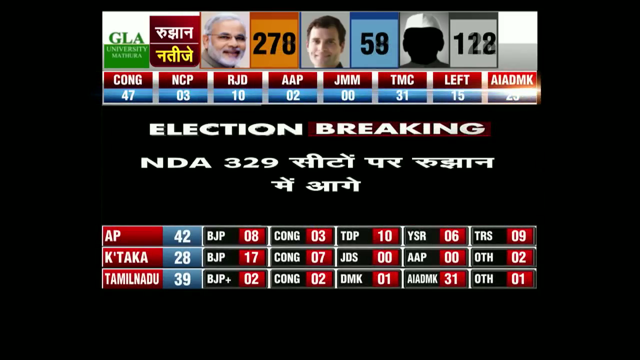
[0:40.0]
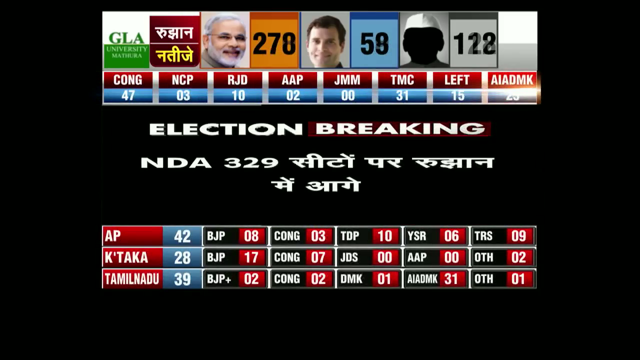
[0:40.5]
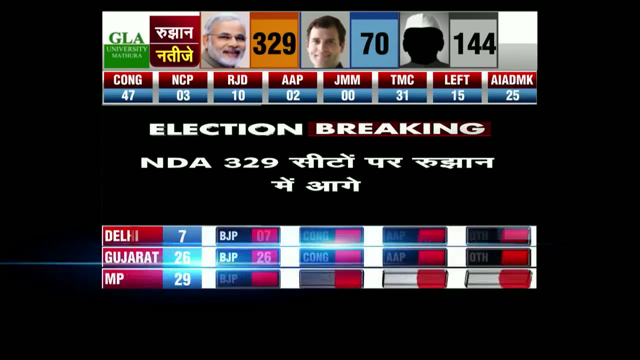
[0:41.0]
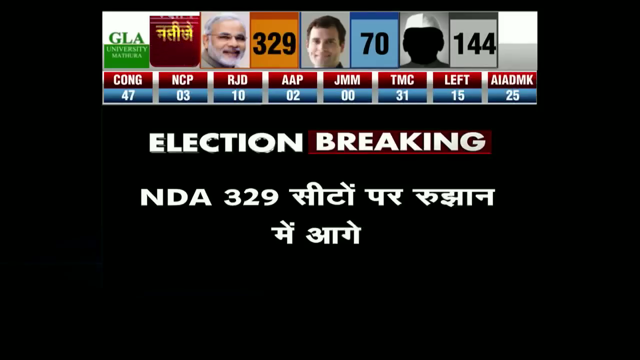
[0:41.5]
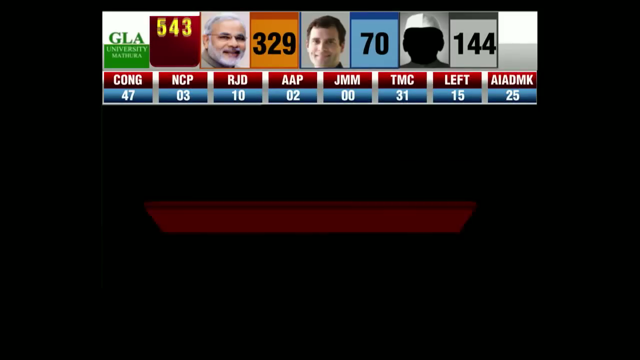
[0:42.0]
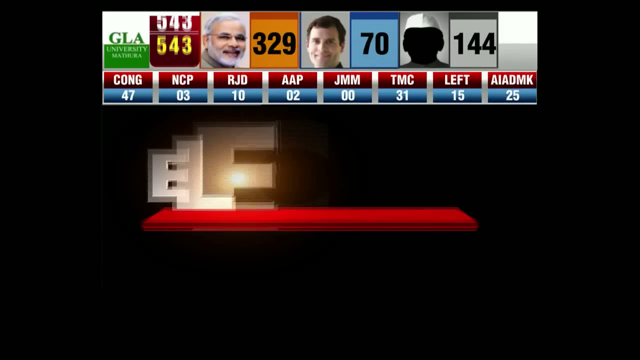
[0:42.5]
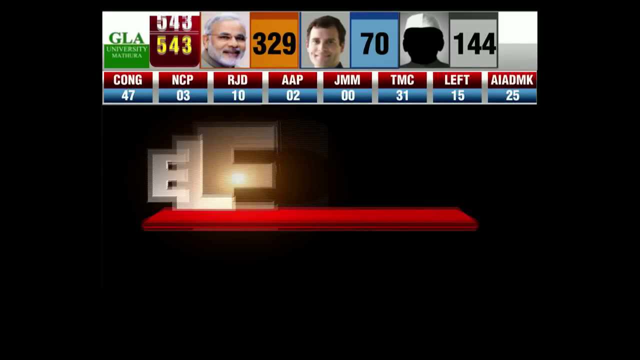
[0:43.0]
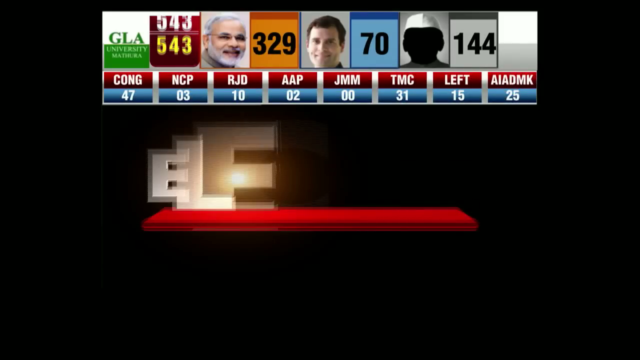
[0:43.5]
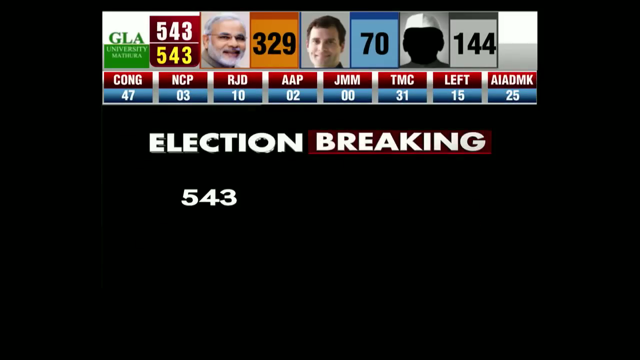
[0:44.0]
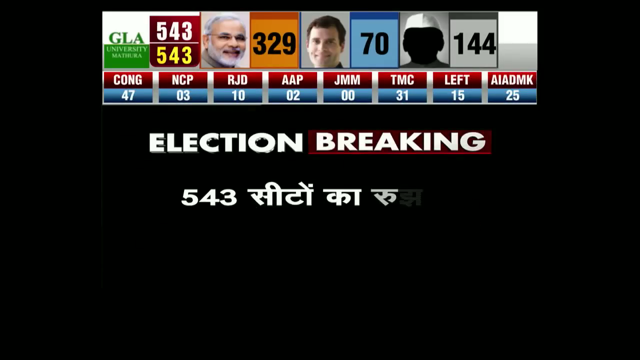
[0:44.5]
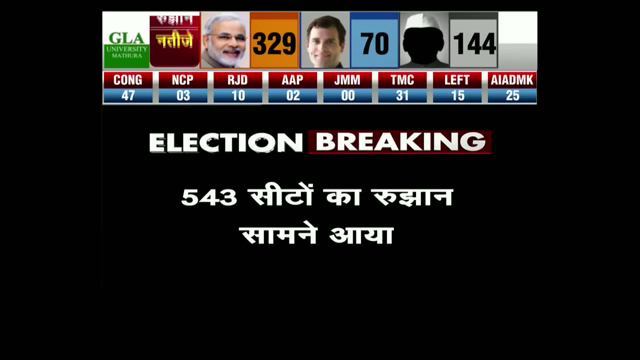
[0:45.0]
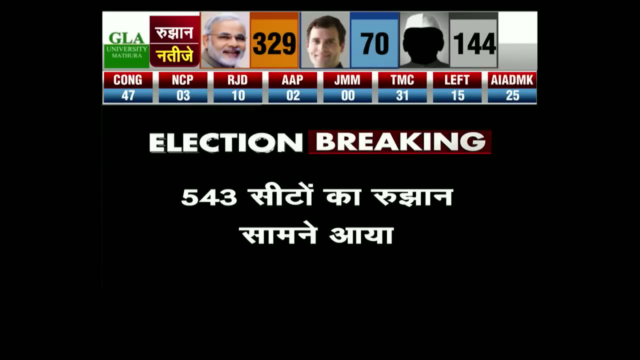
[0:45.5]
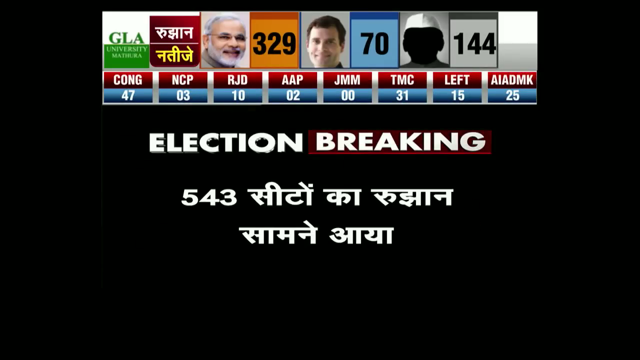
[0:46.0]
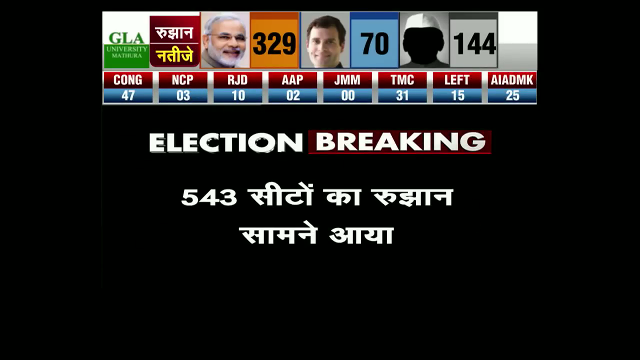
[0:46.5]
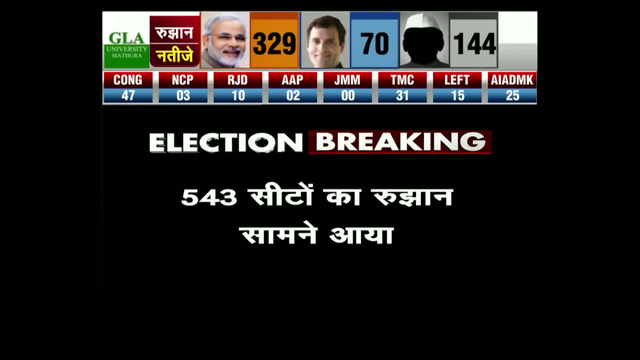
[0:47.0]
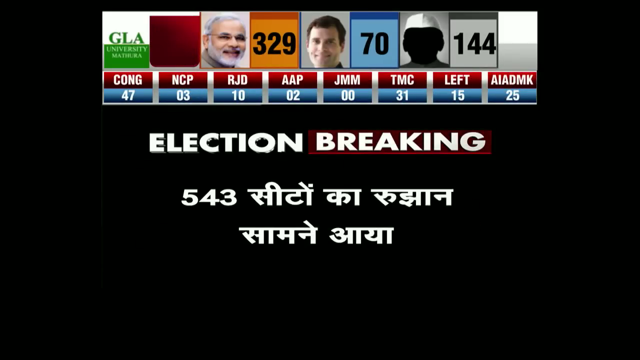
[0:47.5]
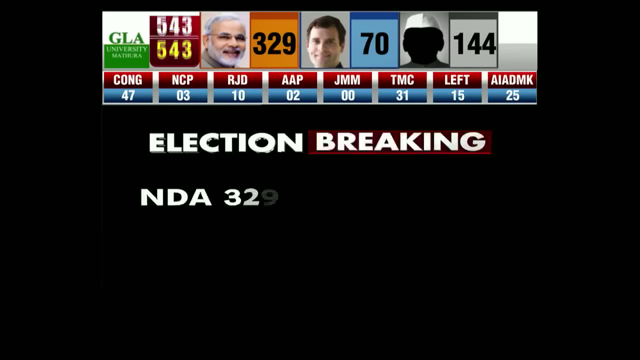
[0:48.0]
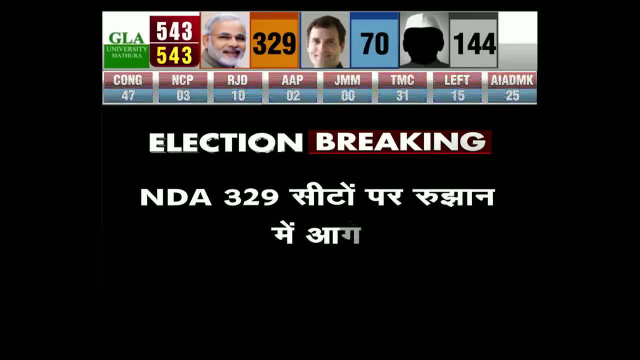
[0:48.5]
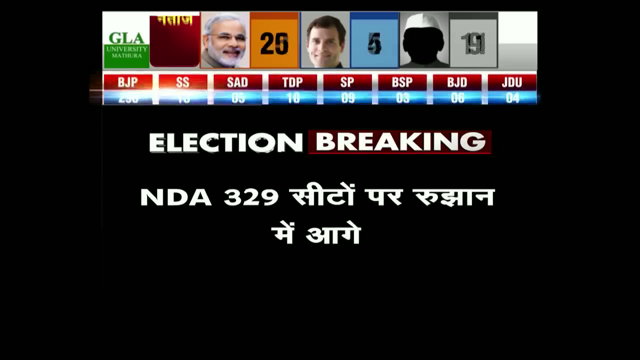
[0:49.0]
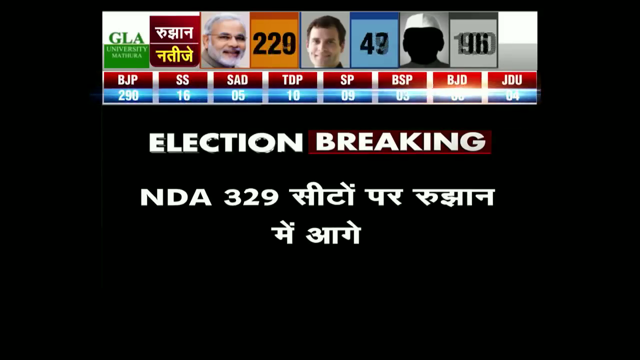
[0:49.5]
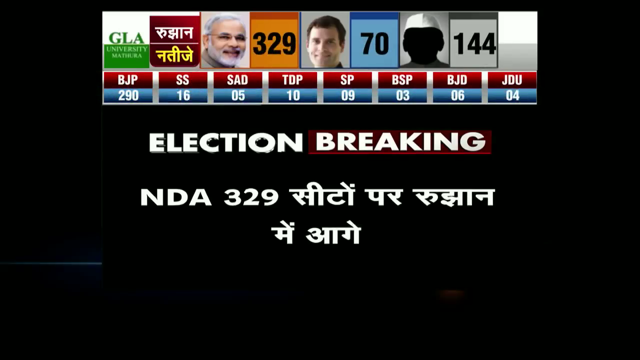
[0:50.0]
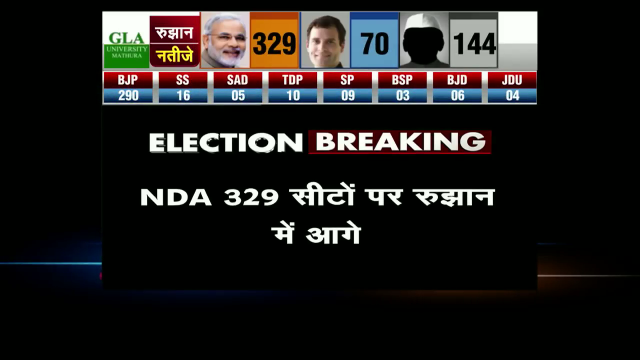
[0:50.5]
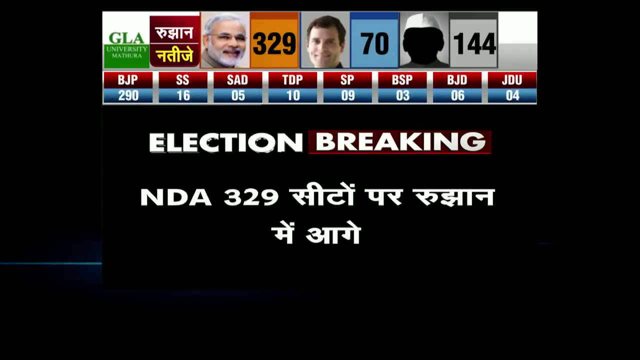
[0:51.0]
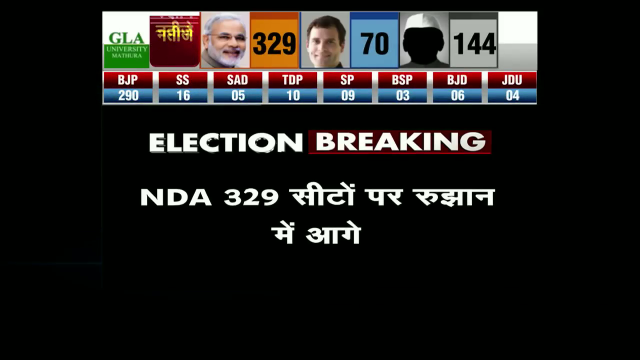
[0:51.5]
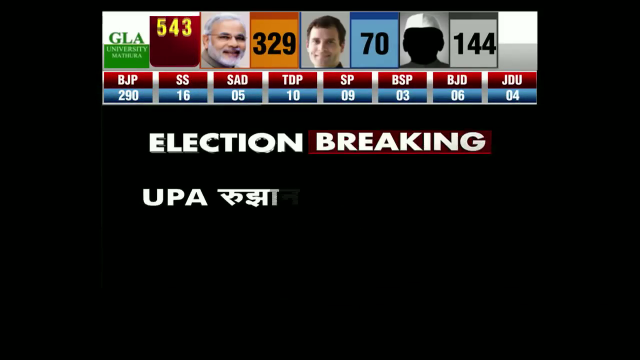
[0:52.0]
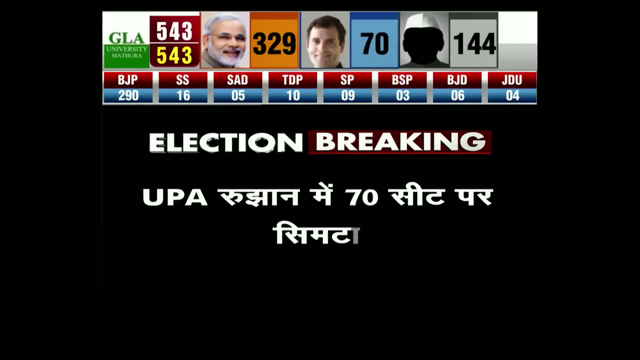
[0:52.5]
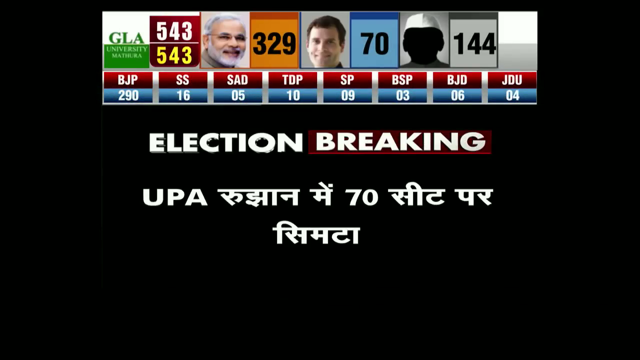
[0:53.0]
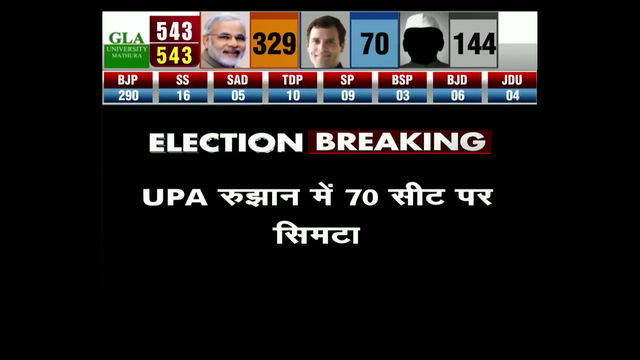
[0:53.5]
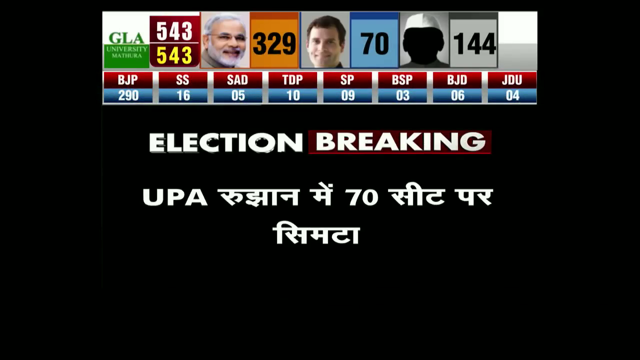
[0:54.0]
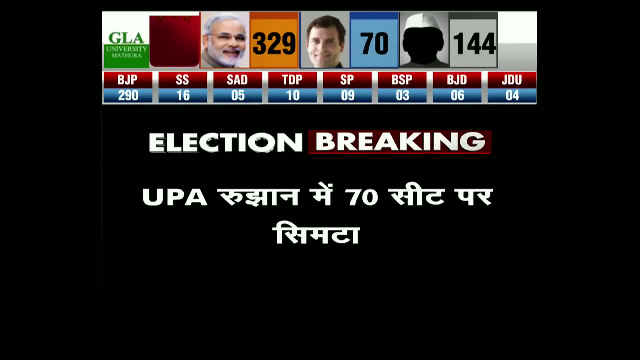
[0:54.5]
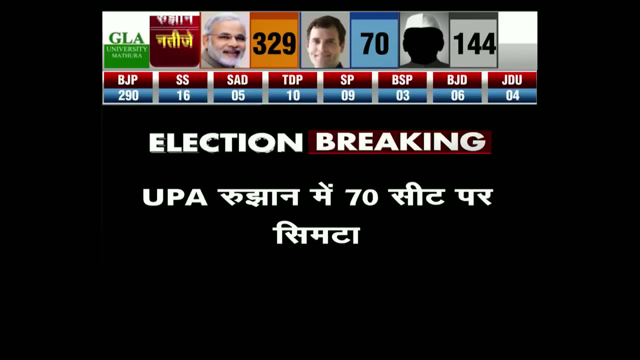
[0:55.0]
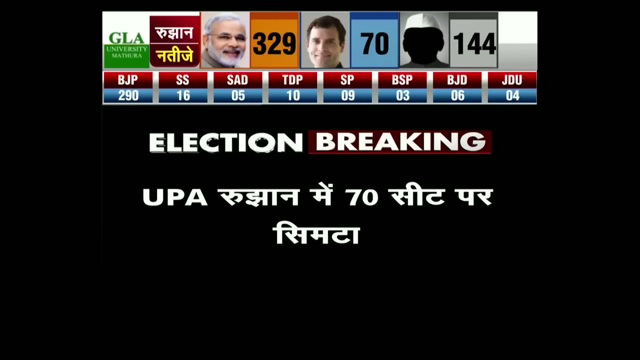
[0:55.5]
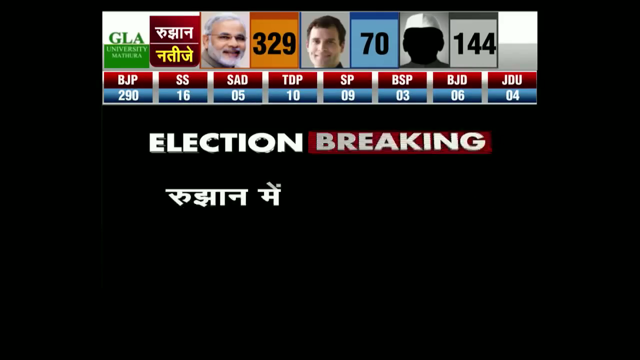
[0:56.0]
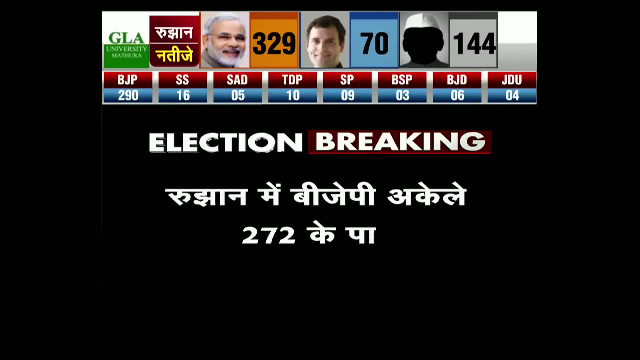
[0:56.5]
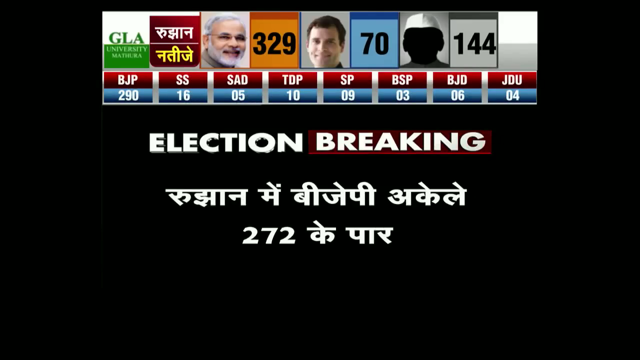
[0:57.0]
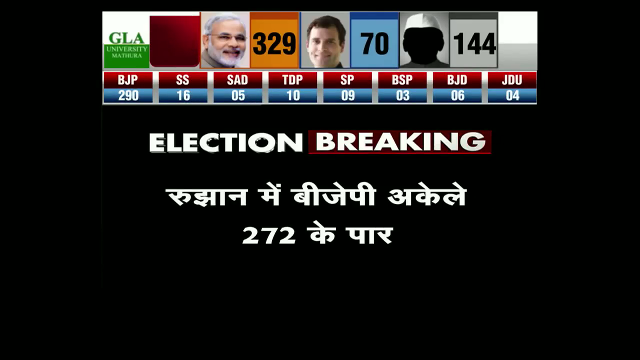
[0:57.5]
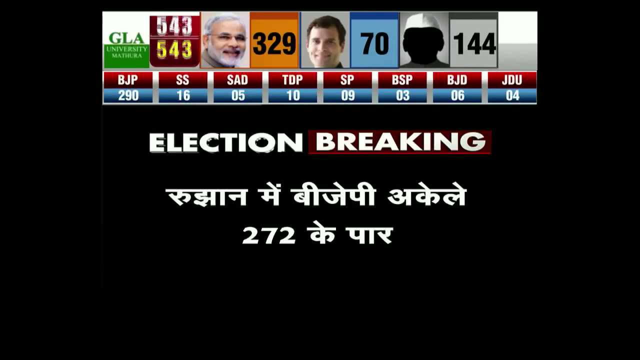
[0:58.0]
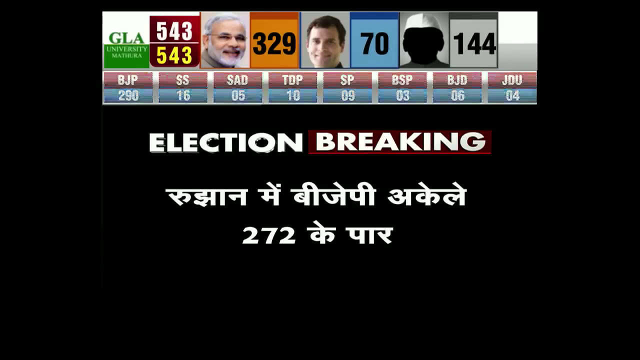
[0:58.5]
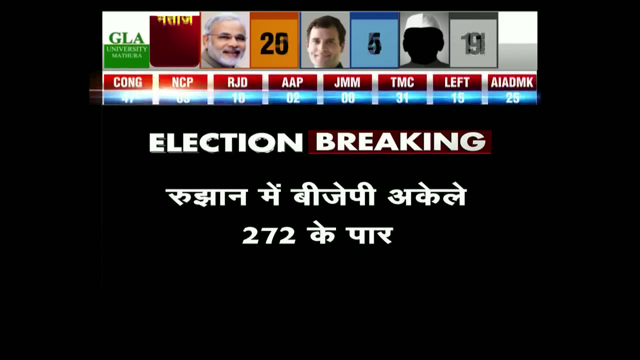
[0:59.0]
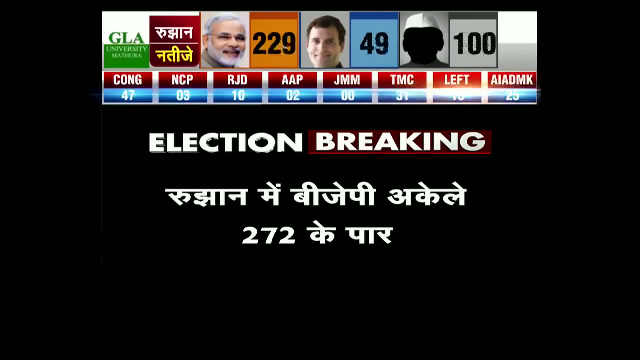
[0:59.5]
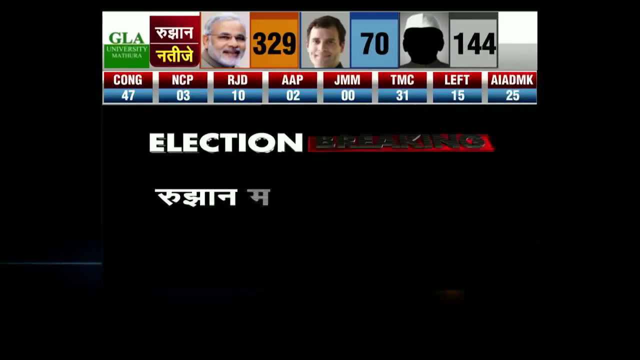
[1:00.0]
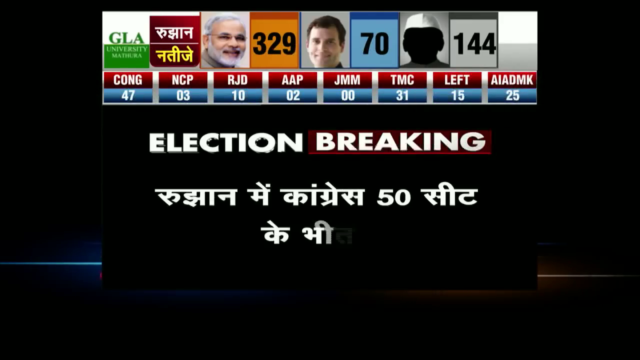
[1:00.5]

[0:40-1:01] "GLA university" appears in green and white, along with the presenter and the participants in an election. One participant, an elderly man with gray hair all over, has a score of 278, another participant has a score of 58, and another has a score of 122. A write-up reads "election breaking", another write-up underneath also shows "election breaking", and there is other writing, apparently Indian. The election seems to be taking place in India, and as votes come in, each participant's figures increase. A chart below shows how each state voted and the points each participant is getting.